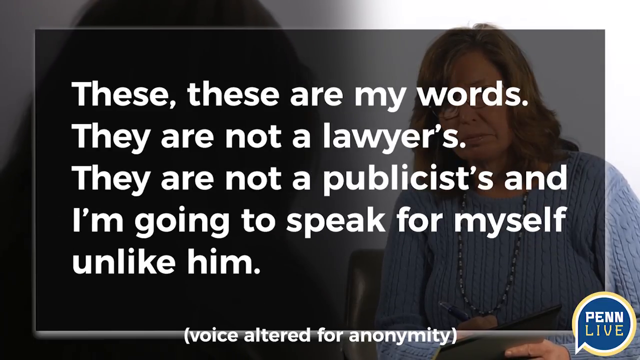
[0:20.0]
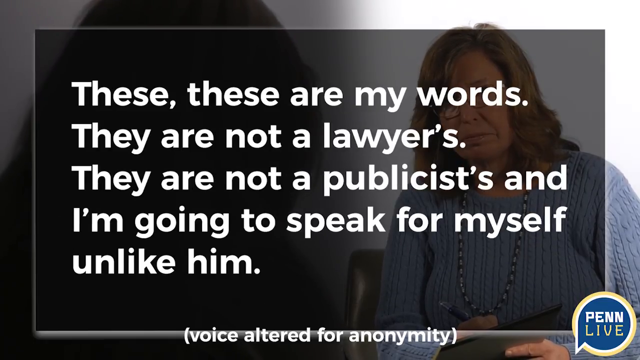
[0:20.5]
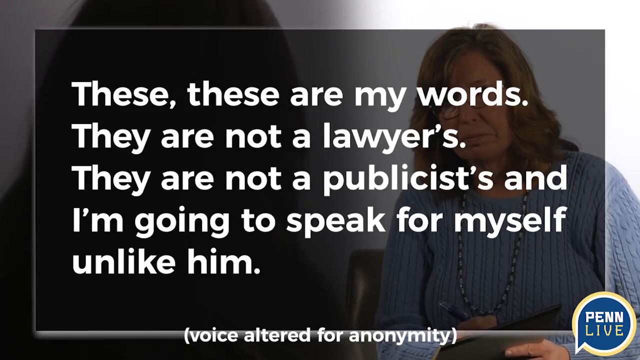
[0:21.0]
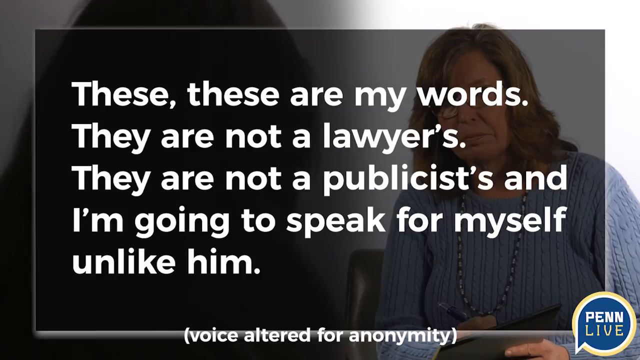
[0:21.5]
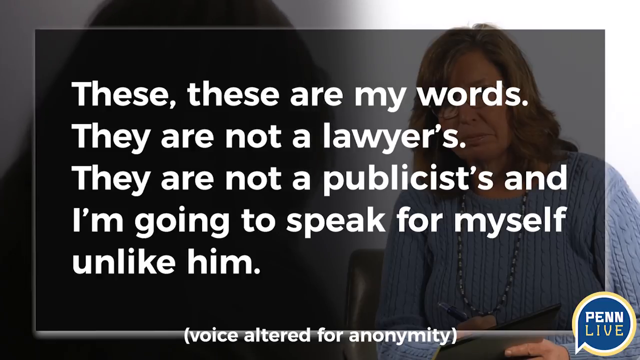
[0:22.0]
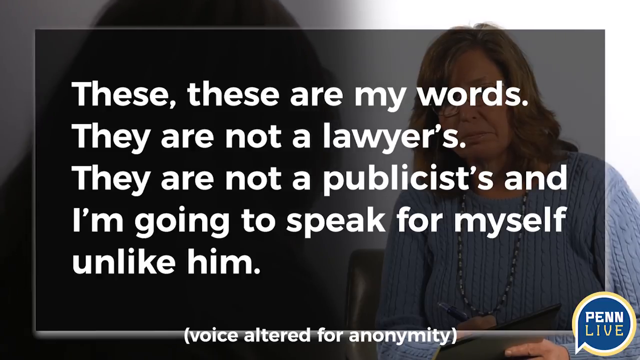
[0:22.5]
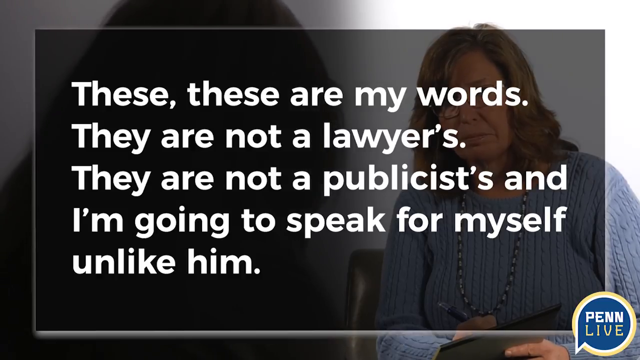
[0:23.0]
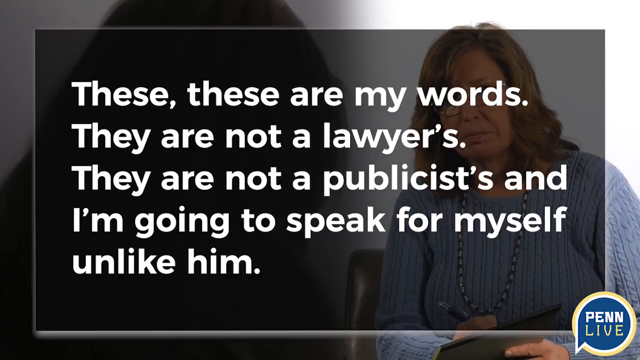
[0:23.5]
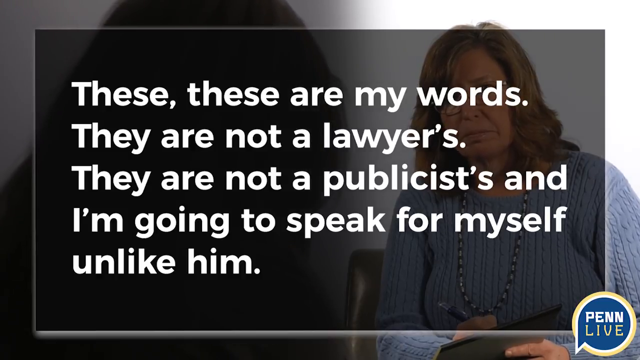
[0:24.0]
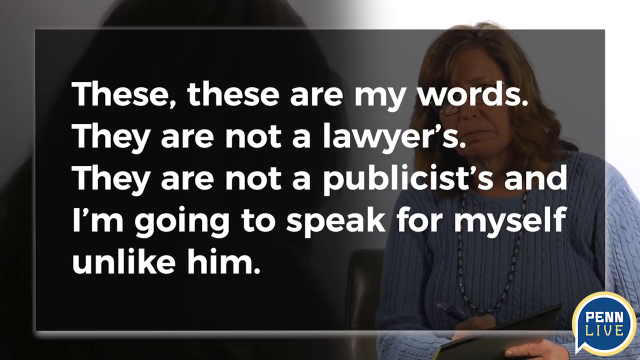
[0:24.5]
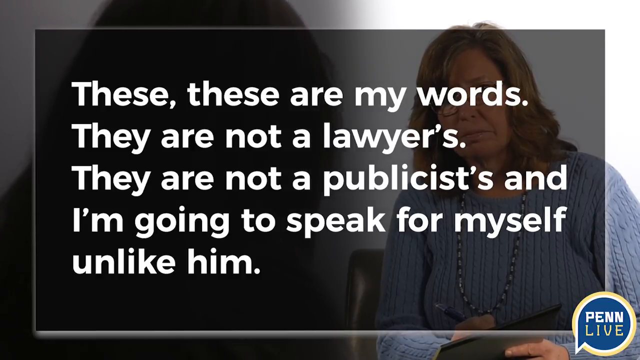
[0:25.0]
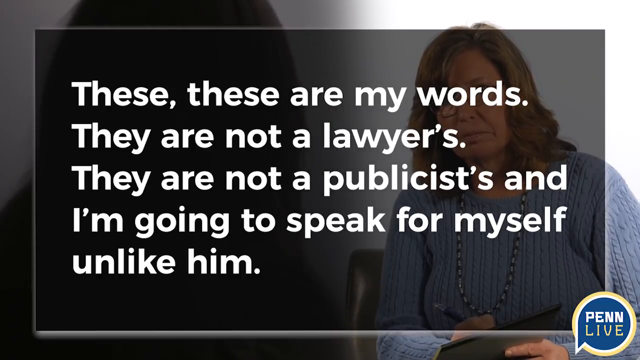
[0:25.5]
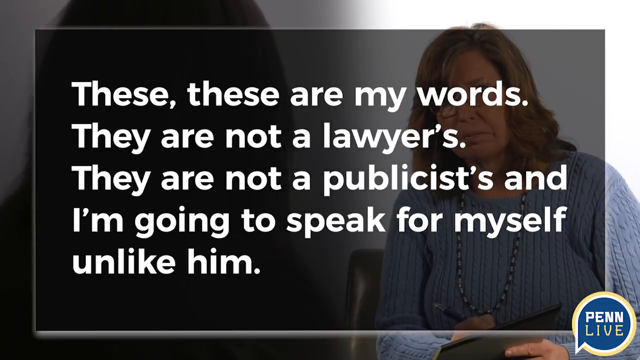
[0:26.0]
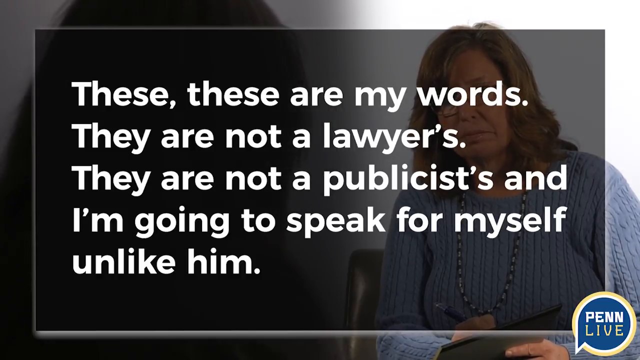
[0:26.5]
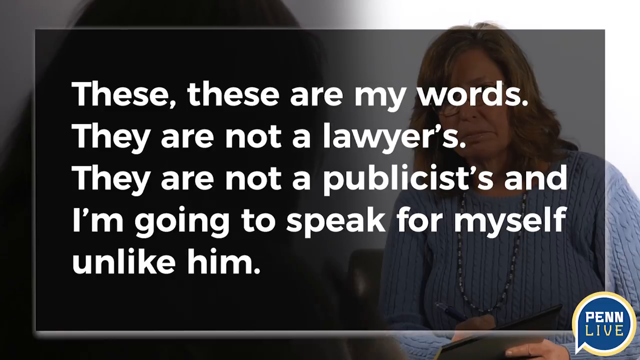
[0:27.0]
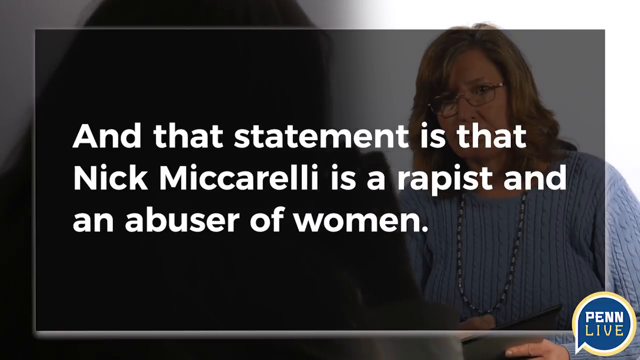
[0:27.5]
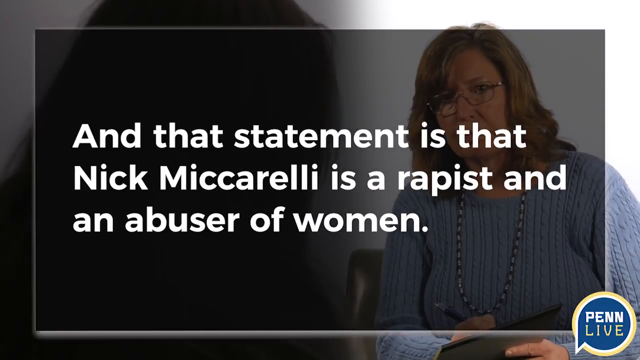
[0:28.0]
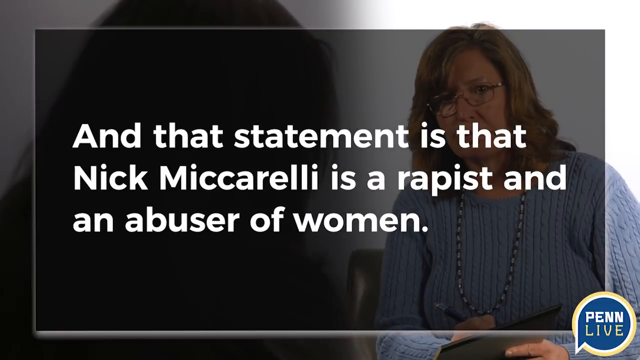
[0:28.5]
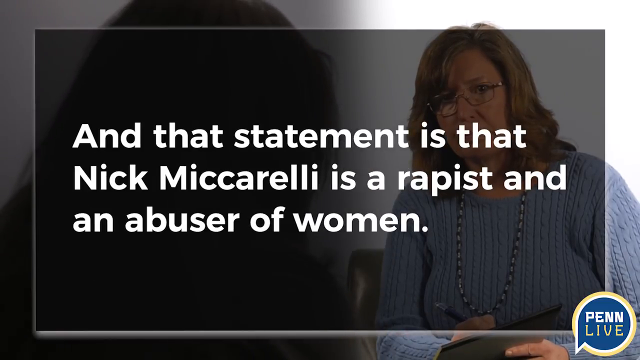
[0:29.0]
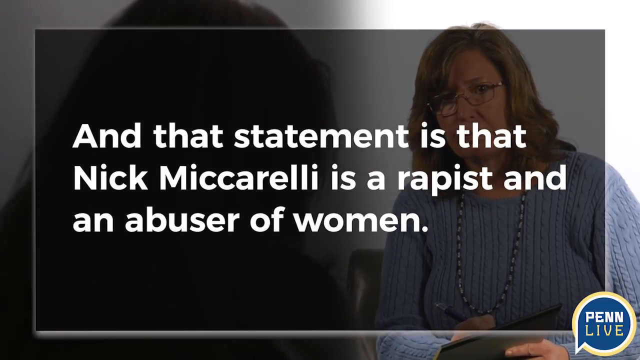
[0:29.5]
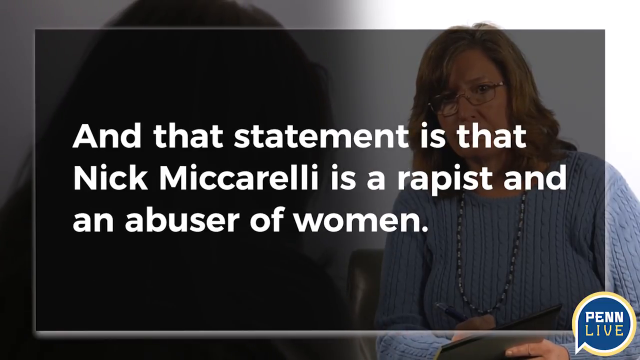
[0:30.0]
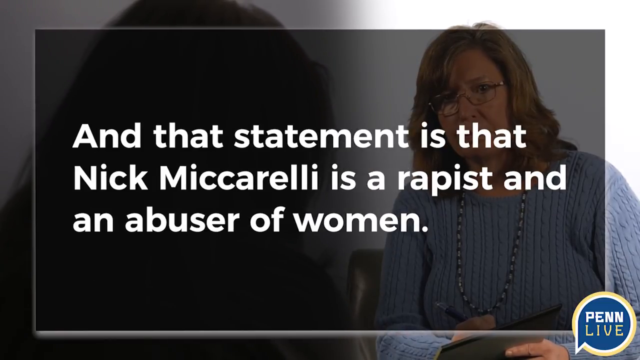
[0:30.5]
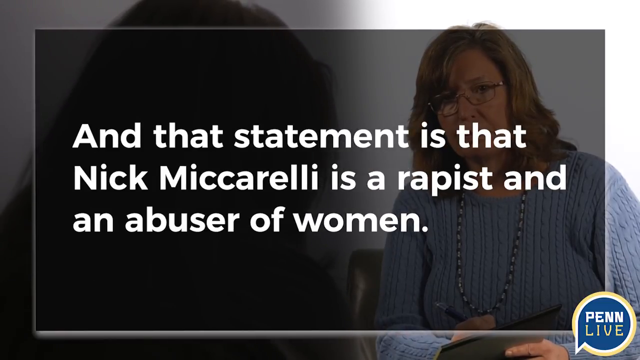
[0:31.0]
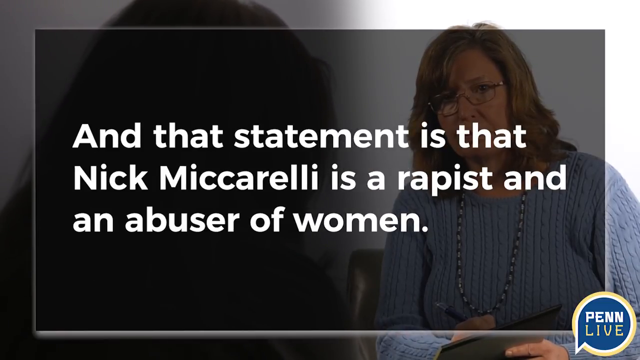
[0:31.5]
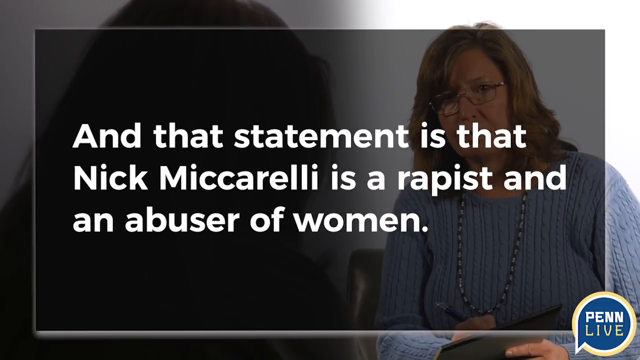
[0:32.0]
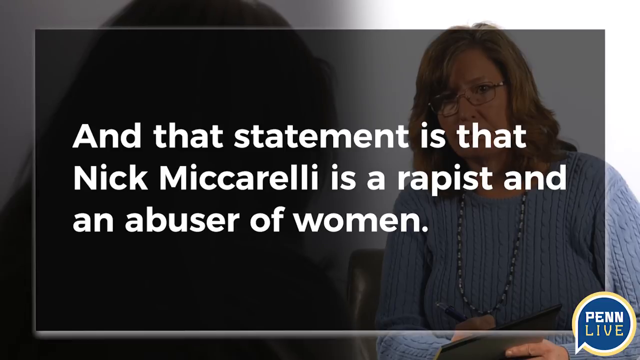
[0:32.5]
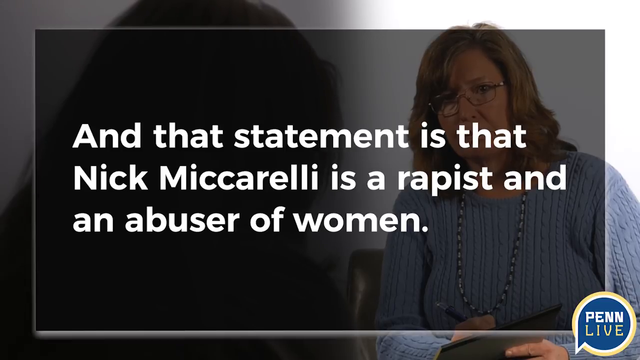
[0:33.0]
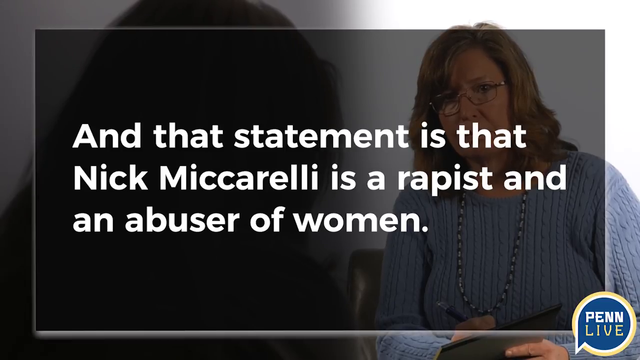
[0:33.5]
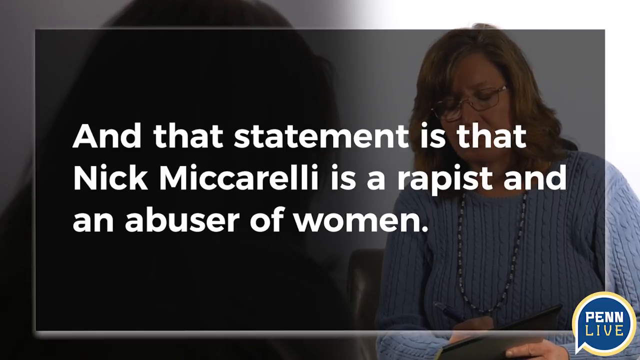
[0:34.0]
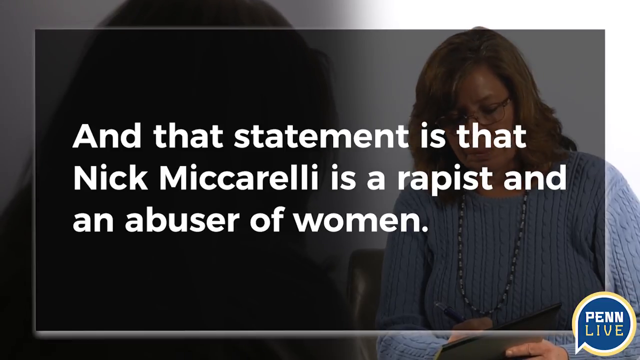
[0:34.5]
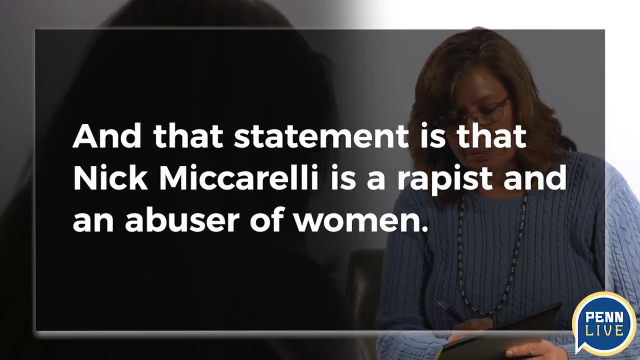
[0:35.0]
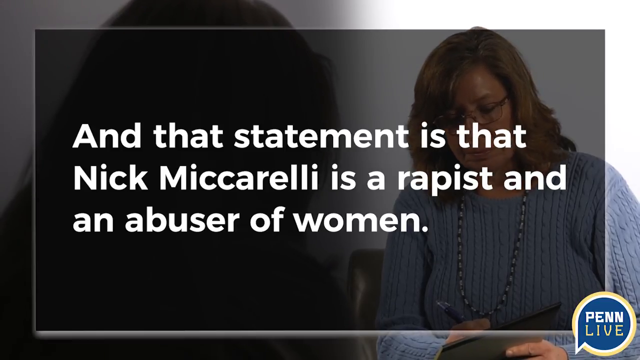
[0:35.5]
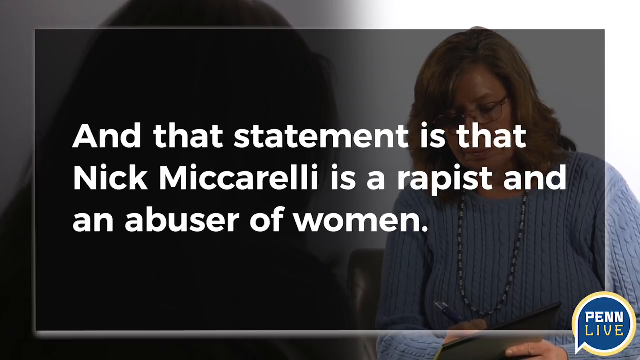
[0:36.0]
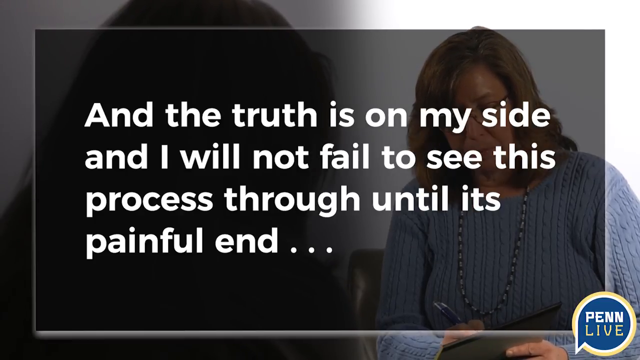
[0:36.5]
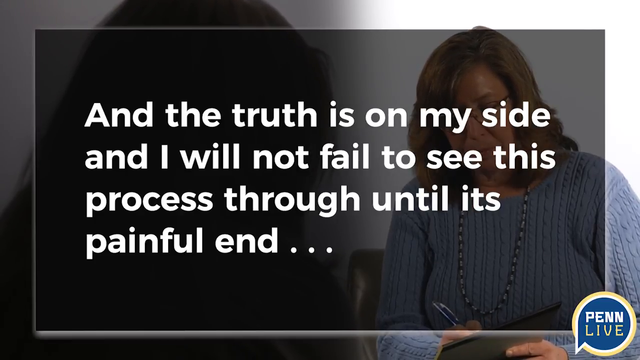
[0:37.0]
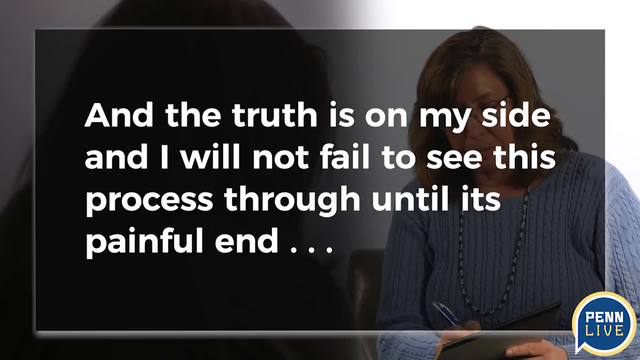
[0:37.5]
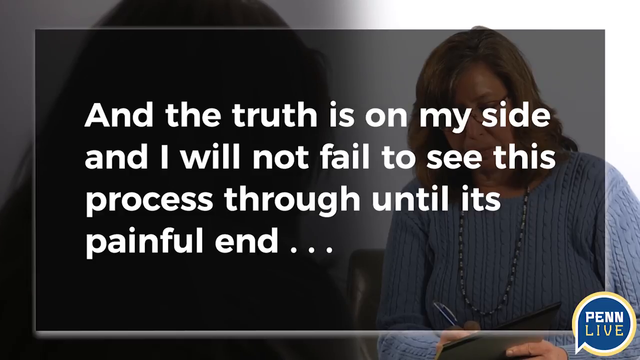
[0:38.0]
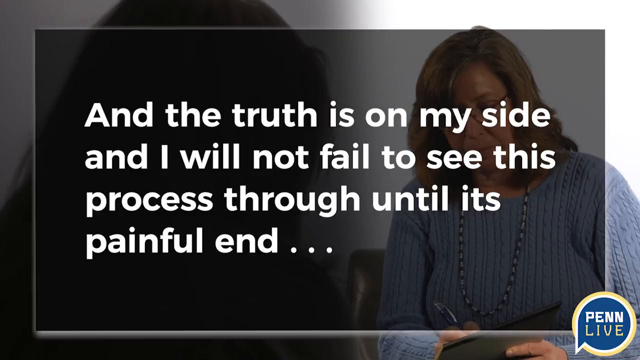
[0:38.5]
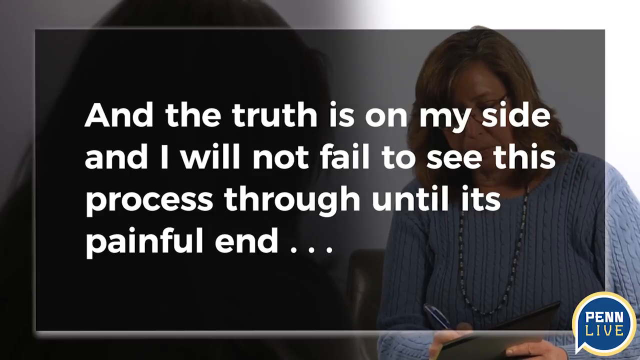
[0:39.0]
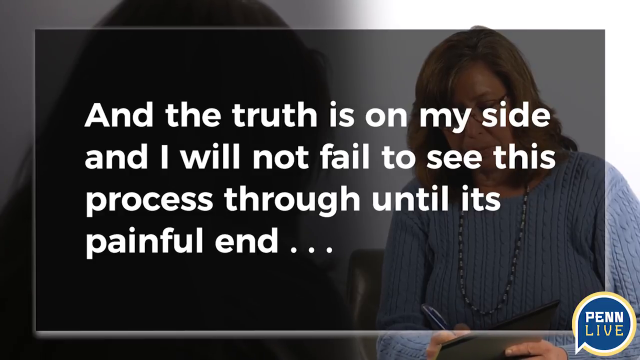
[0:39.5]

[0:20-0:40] The interview continues with the same two people, and Nick is displayed. Words in bold white font appear on screen, speaking about the truth and saying that she will not fail to see this process through until its painful end. The speaker appears to be hidden, and the questioning concerns the accusations. The accuser says that Nick McCurry is a rapist and an abuser of women. A logo appears in the bottom right of the screen. As the two people continue talking, the interviewer is shown as a female with brown hair, wearing a blue sweater and a necklace.